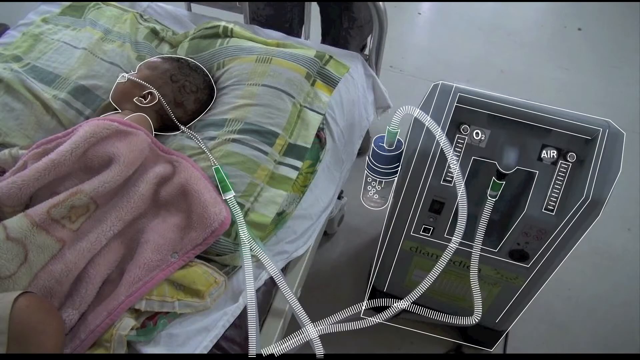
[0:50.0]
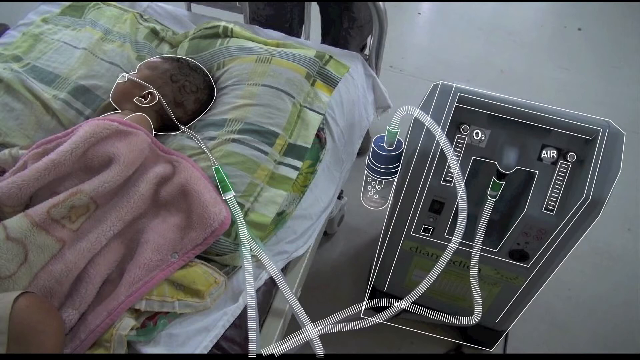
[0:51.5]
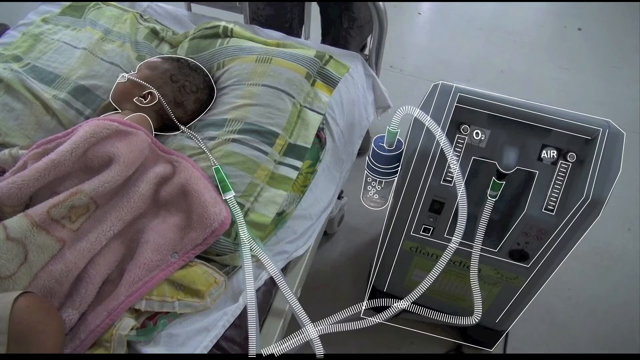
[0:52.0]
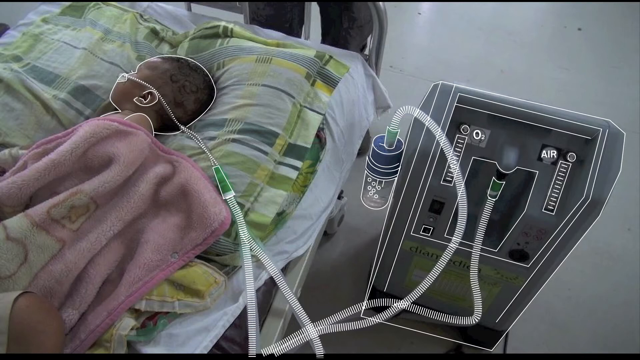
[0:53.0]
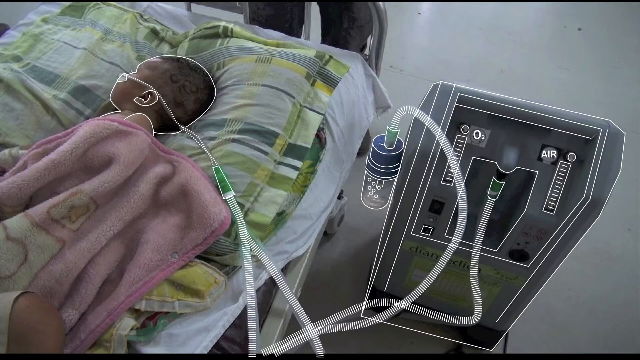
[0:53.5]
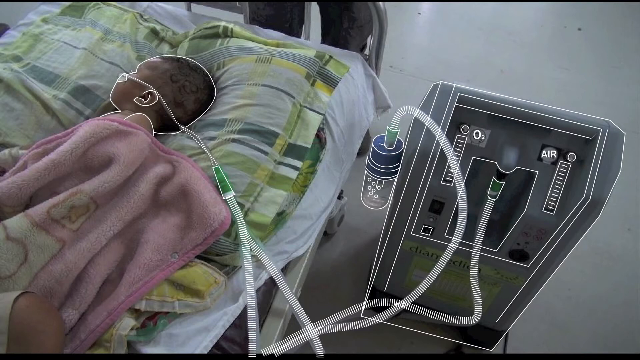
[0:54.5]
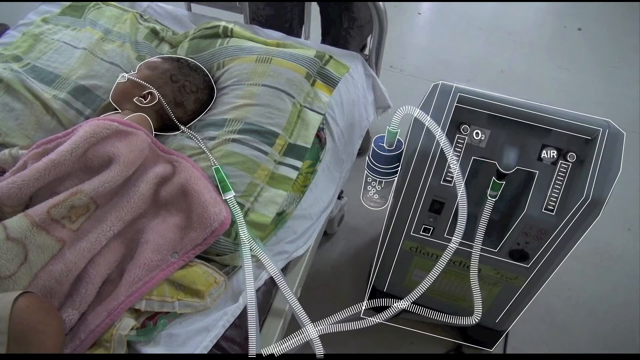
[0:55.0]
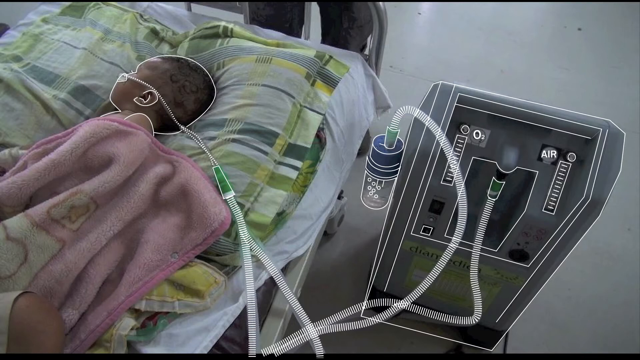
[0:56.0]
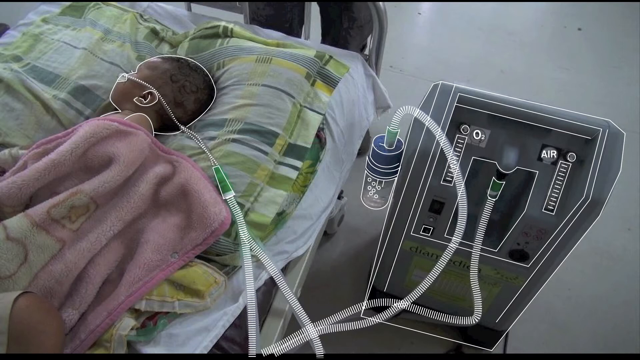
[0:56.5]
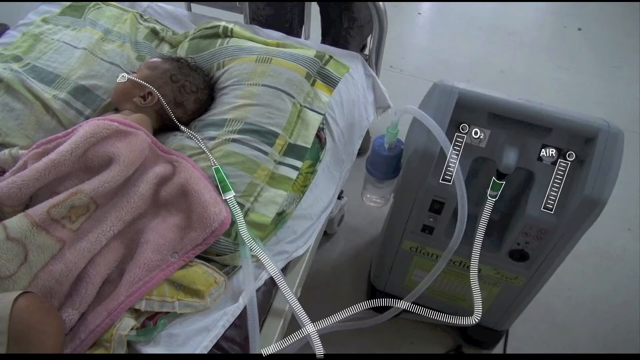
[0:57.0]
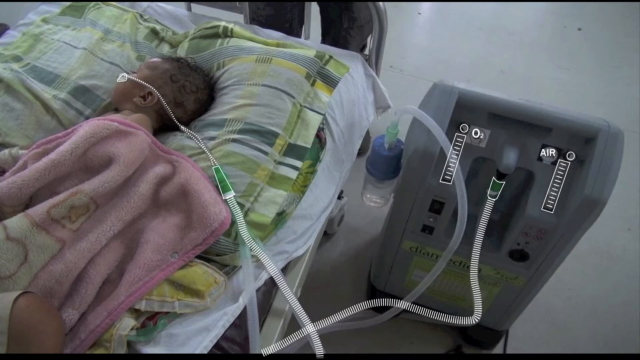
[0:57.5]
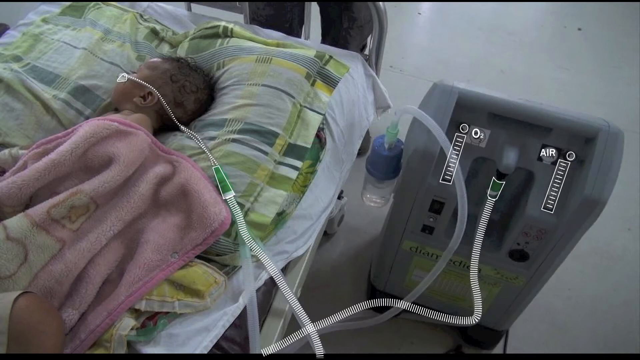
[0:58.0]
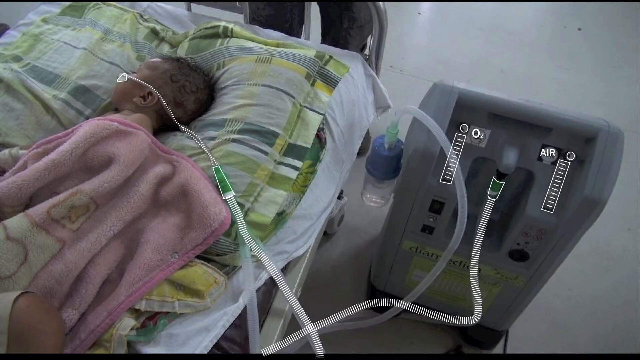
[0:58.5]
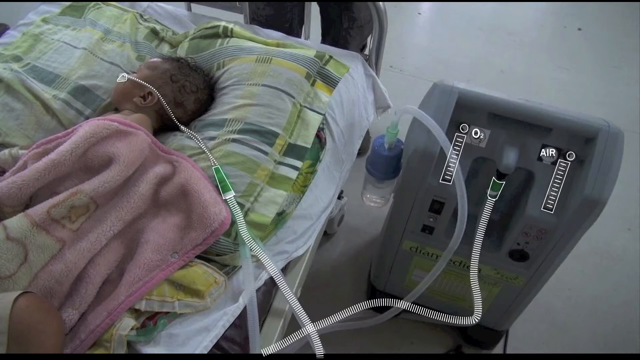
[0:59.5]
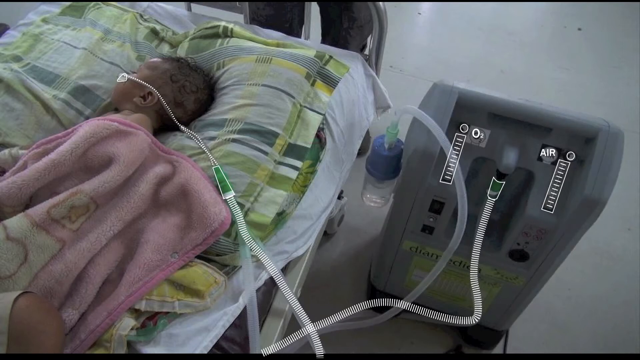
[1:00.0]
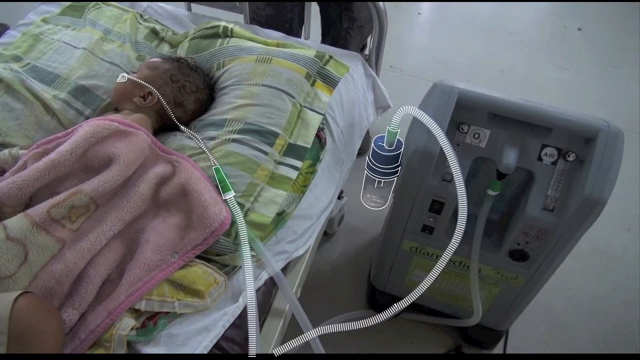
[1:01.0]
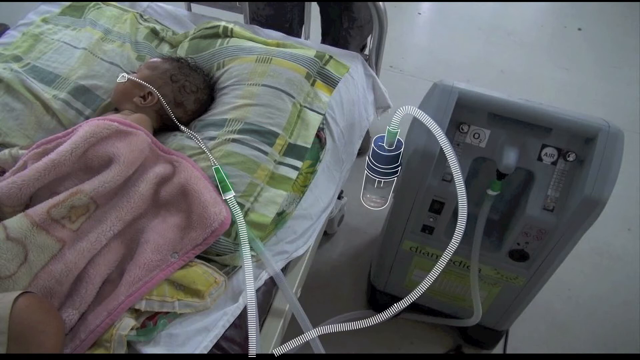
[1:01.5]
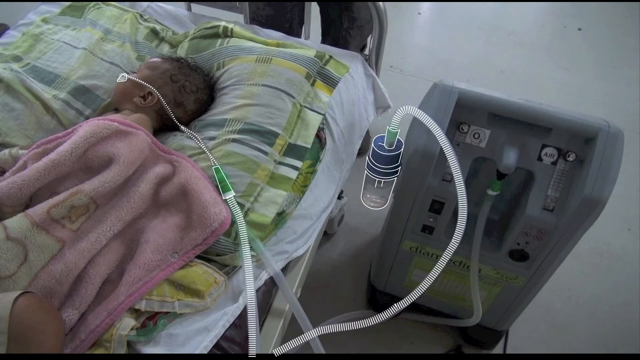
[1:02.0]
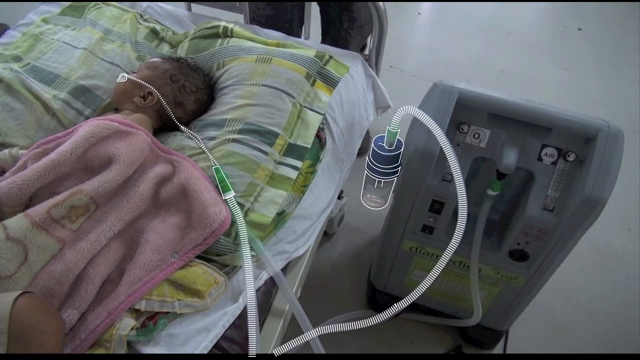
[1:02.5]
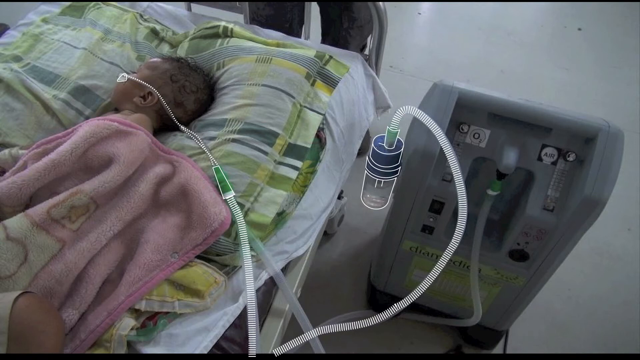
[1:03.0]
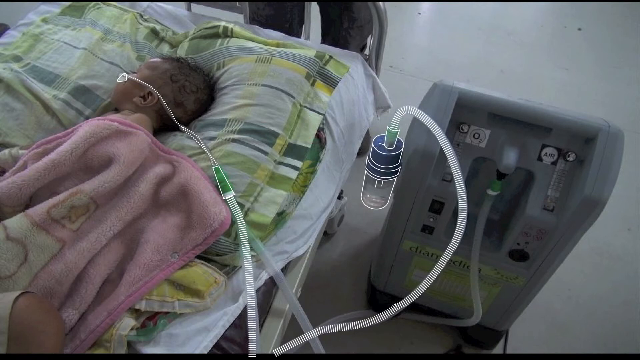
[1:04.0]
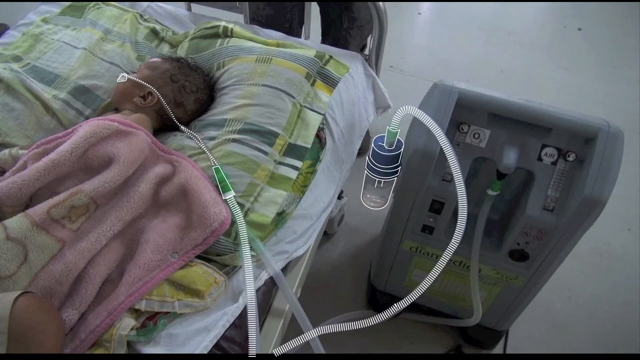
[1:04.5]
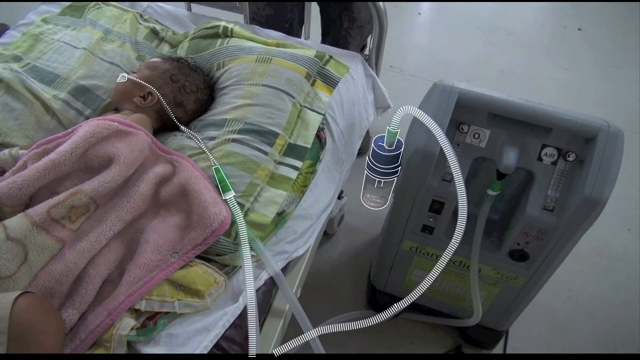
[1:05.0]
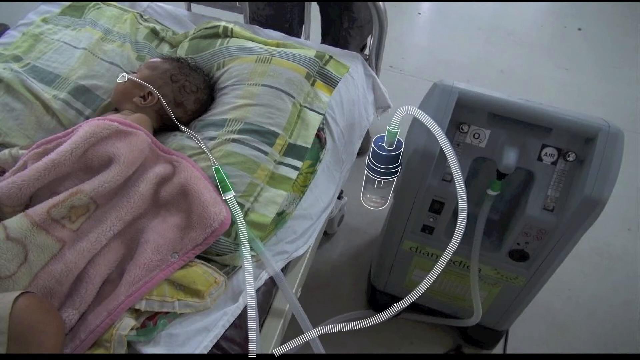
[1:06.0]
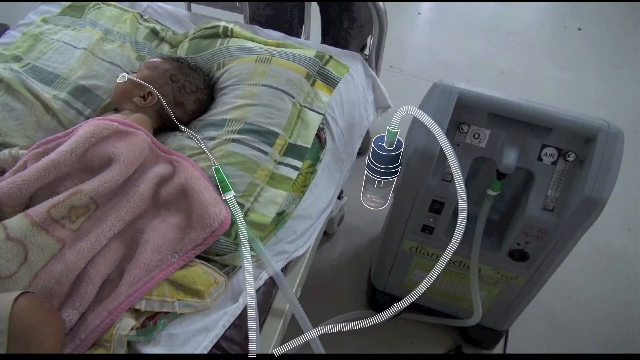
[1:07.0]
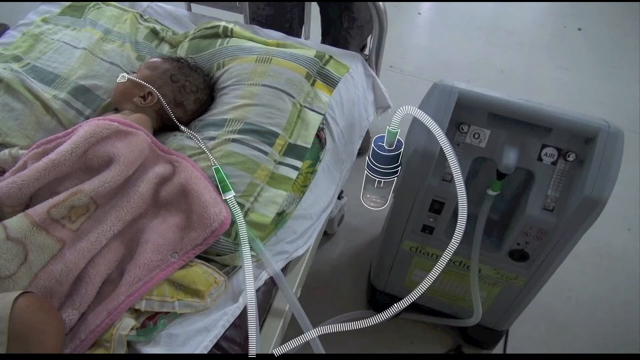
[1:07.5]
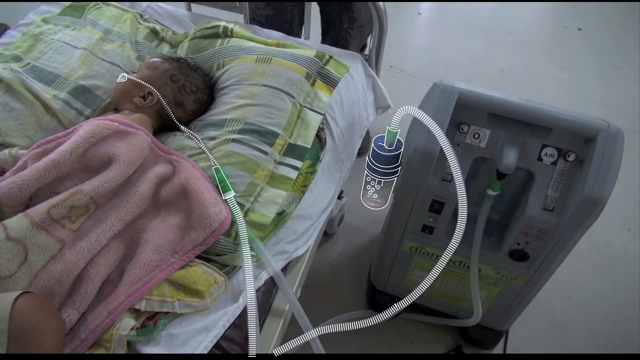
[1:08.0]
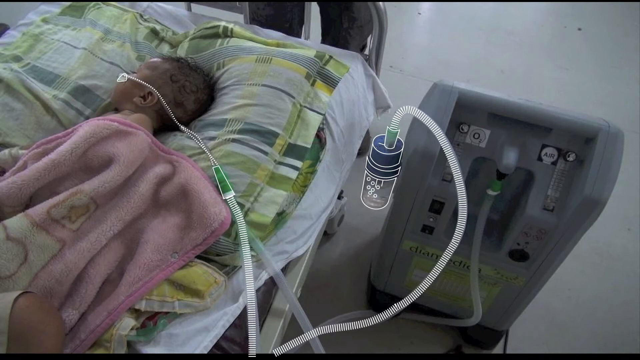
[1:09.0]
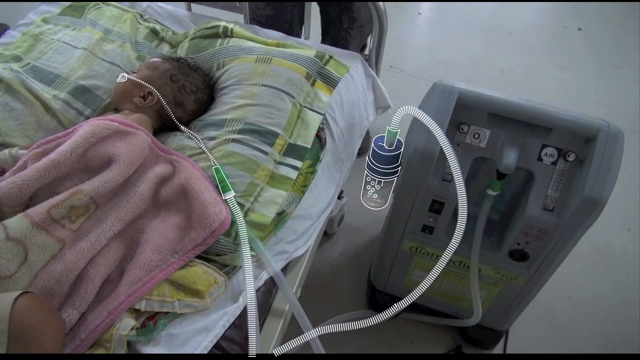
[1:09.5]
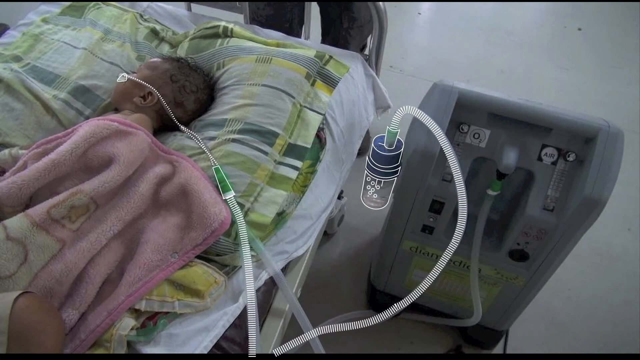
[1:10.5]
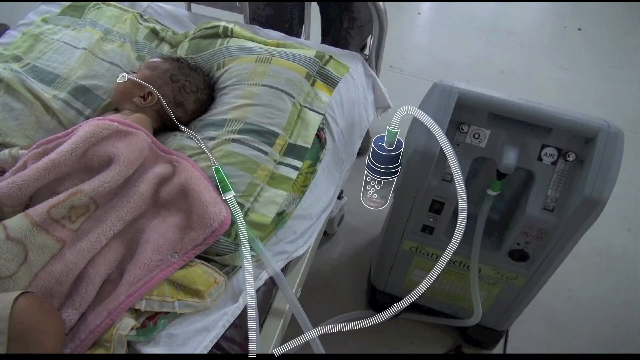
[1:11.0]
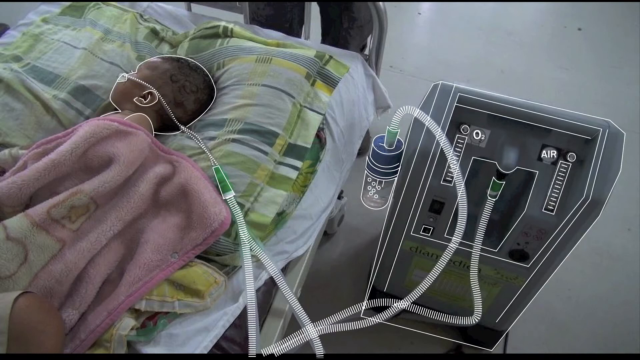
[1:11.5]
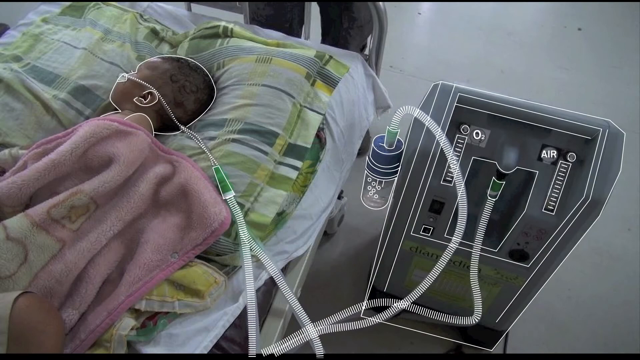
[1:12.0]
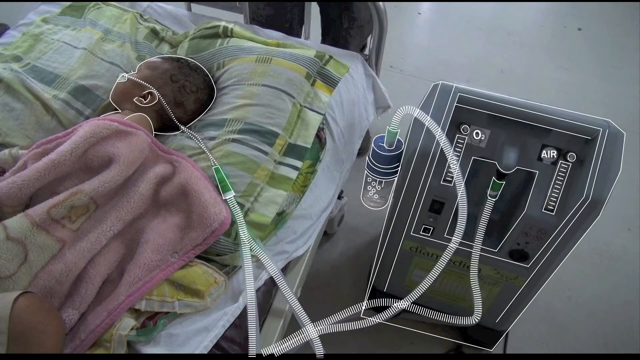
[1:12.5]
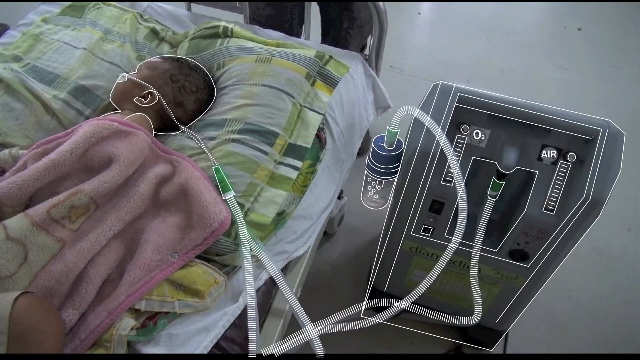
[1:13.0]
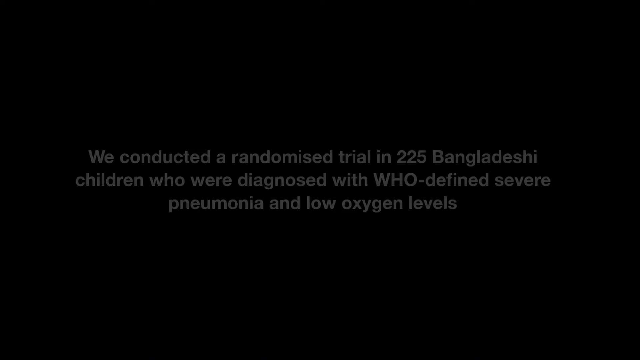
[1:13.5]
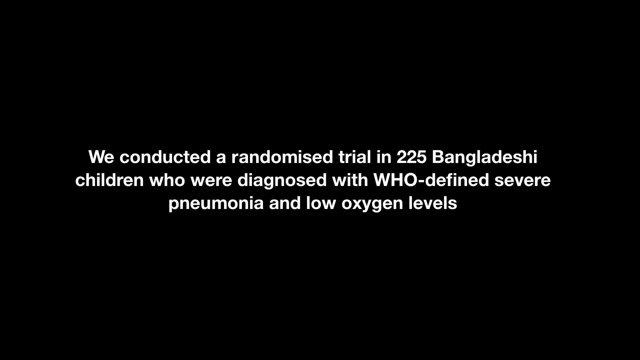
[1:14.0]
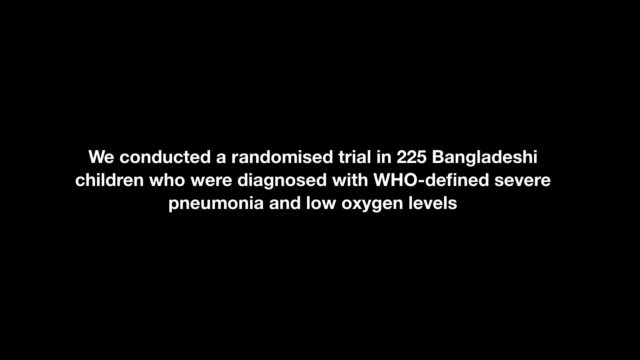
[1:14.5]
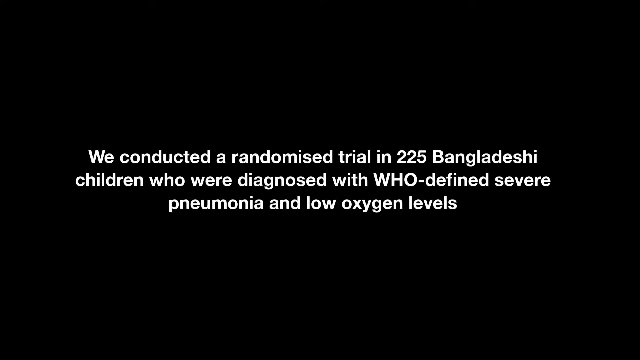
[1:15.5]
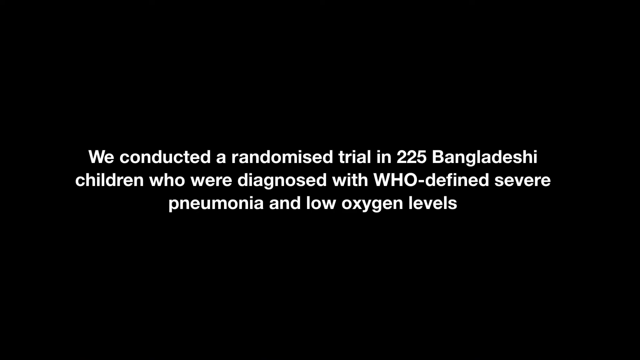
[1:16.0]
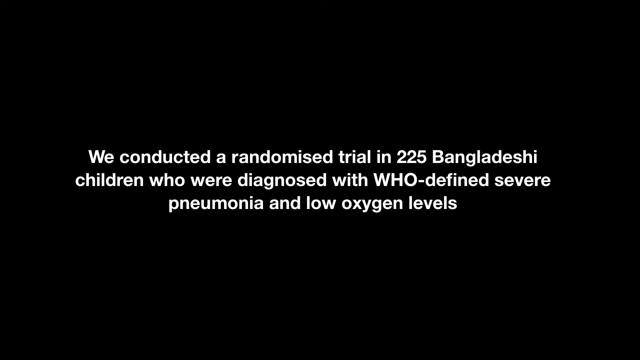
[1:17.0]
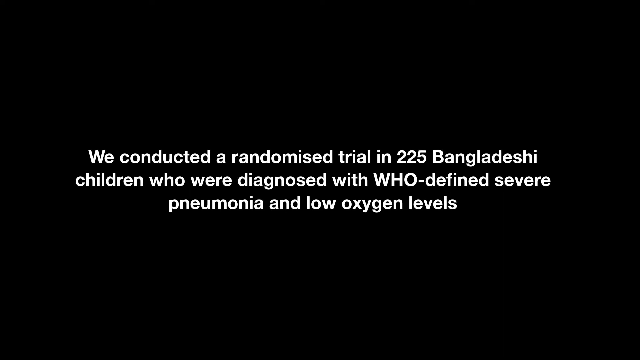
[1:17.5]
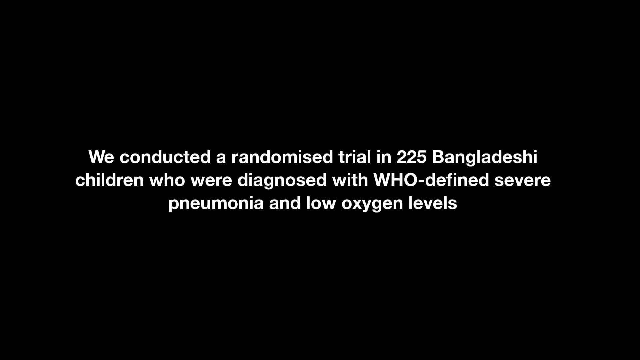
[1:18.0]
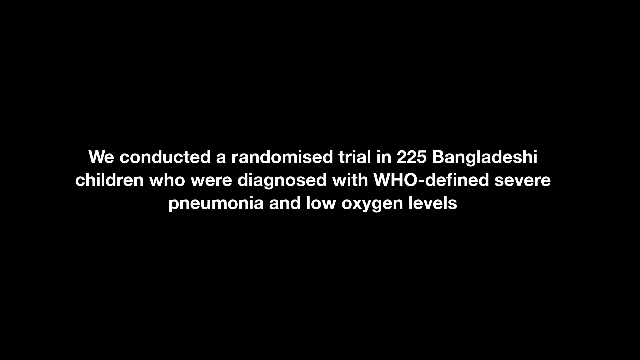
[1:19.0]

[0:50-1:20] The baby has a pink blanket over it and lies on a green and gray sheet with various crosses and lines across it. A white tube is stuck to the baby's face and runs onto the bed, where a green section holds the tubes together before they go into the machine; one tube goes into the machine itself, while another goes into a bottle attached to the machine. The outline fades away to reveal the actual photo of the small baby on the bed attached to the machine. The video keeps flicking between different elements highlighted with white outlines, sometimes the baby and sometimes the machine. The machine shows "O2" and "F". The screen goes black again with white text reading "we conducted a randomized trial in 225 Bangladeshi children who were diagnosed with WHO-defined severe pneumonia and low oxygen levels."